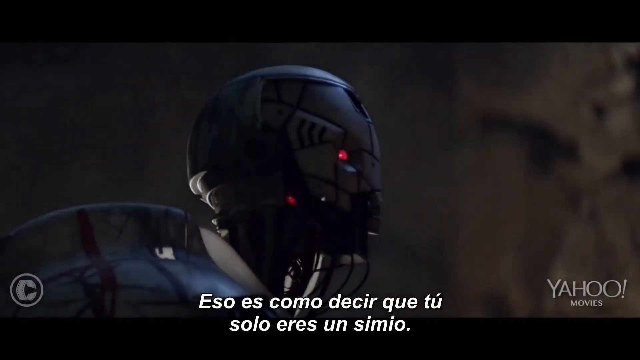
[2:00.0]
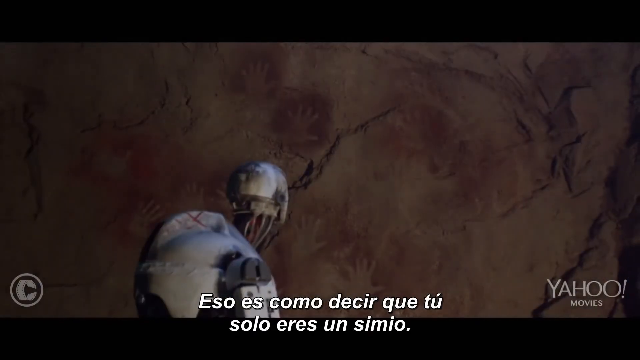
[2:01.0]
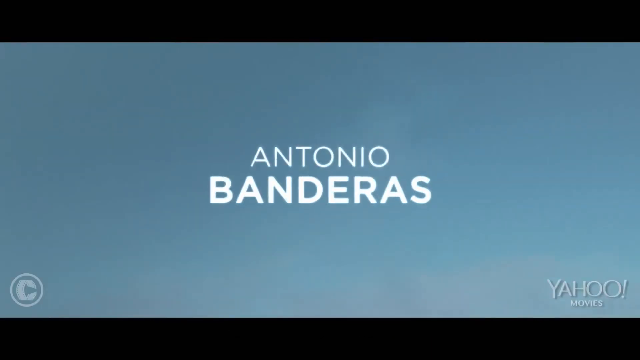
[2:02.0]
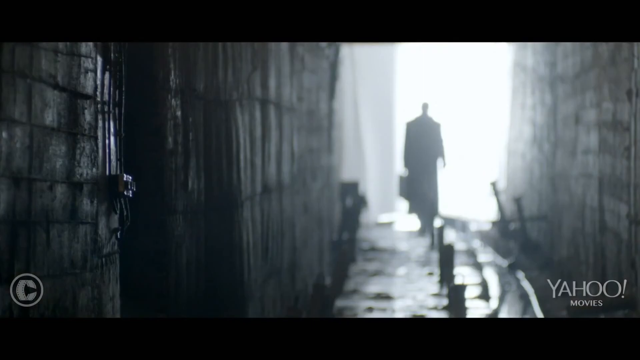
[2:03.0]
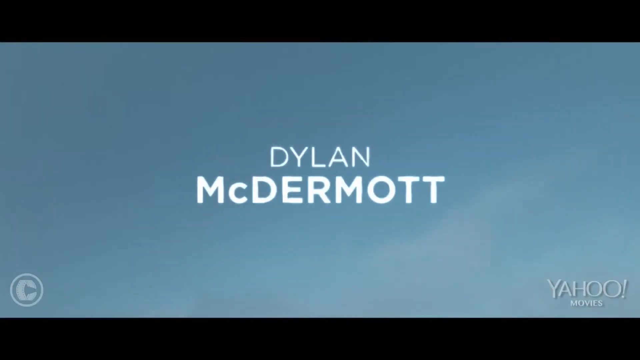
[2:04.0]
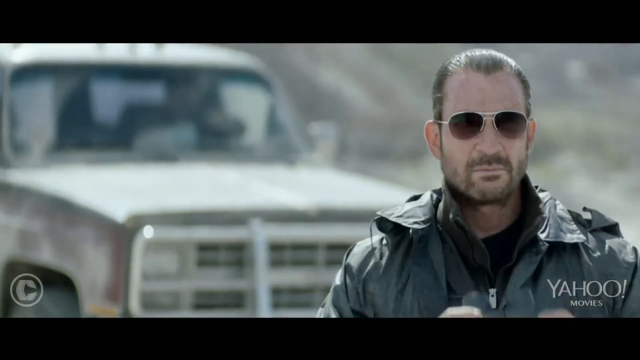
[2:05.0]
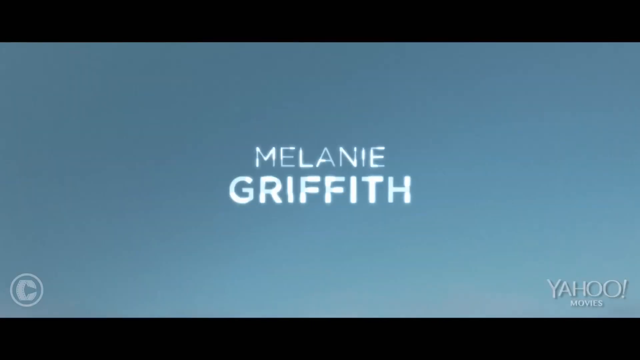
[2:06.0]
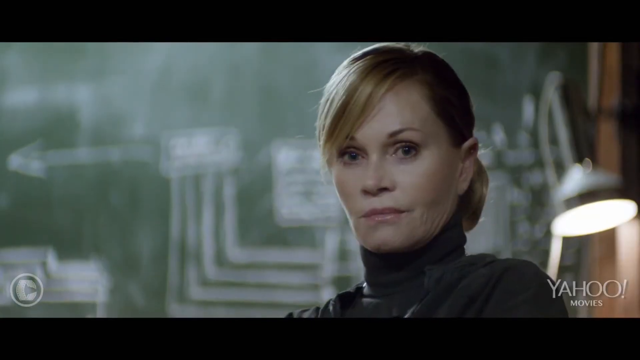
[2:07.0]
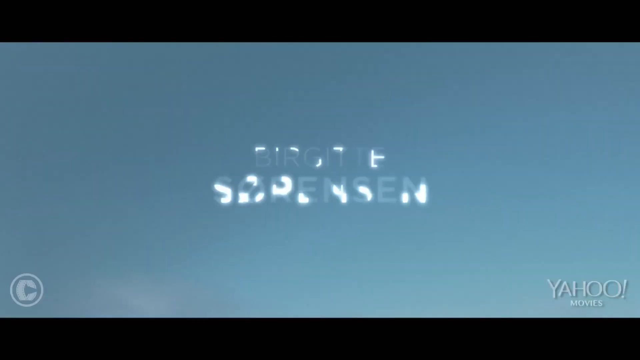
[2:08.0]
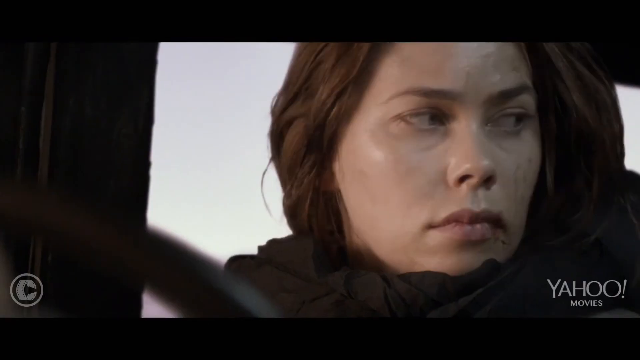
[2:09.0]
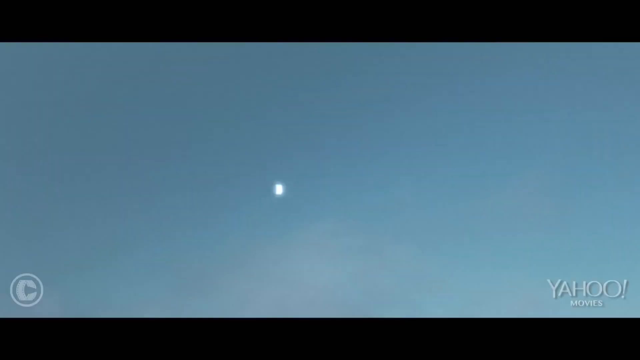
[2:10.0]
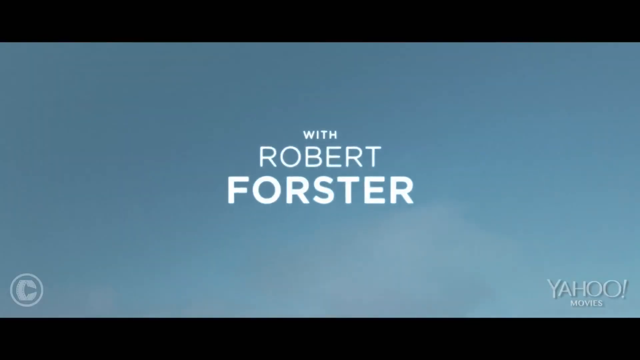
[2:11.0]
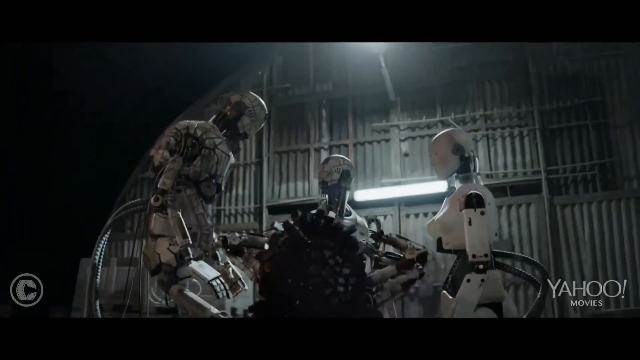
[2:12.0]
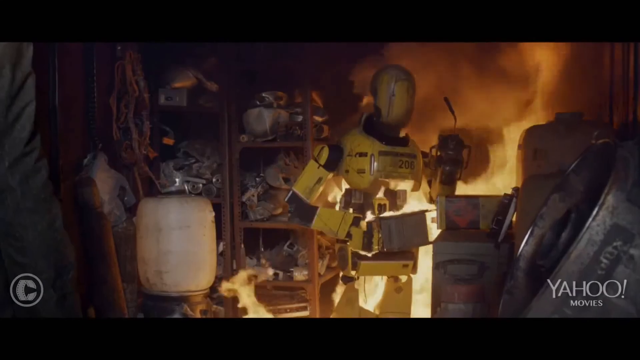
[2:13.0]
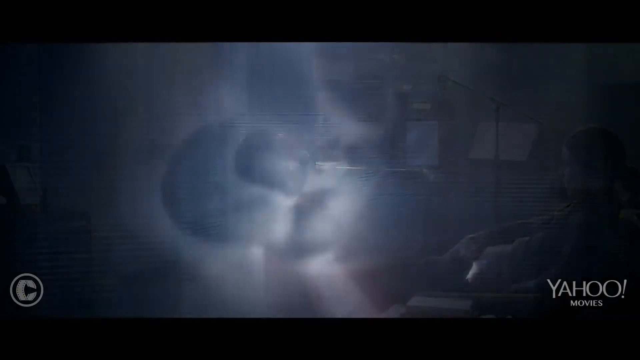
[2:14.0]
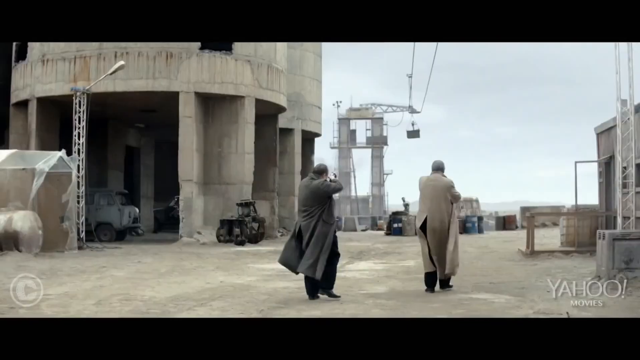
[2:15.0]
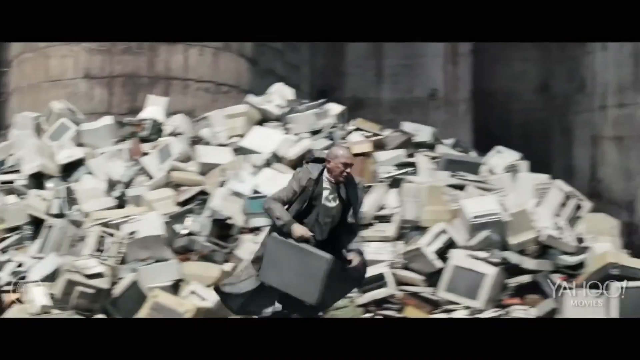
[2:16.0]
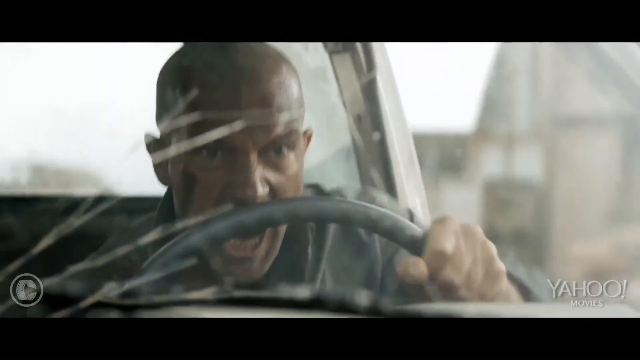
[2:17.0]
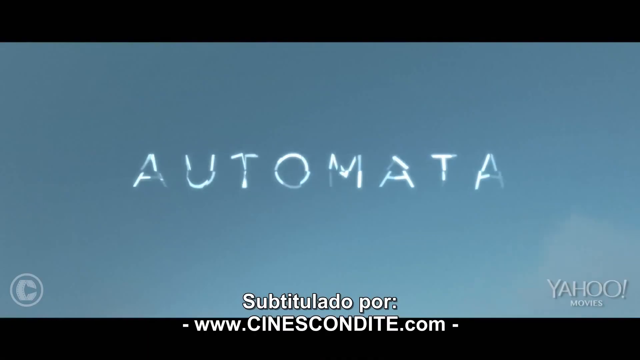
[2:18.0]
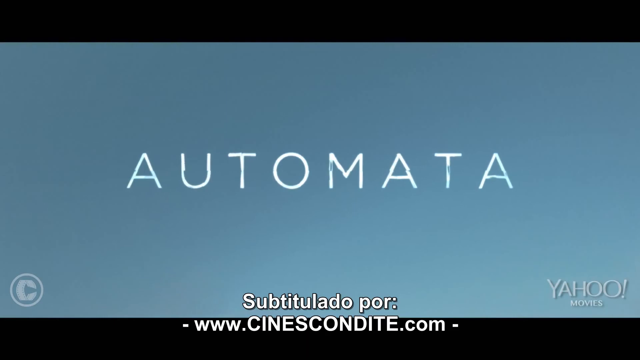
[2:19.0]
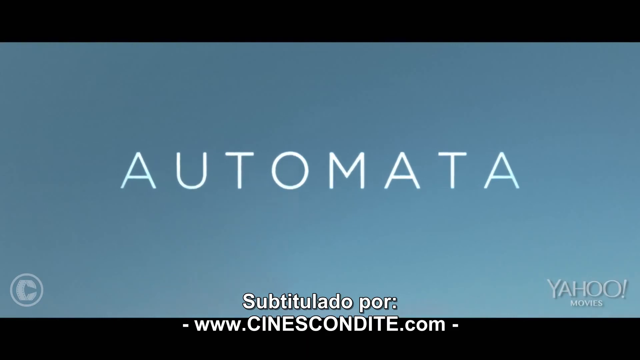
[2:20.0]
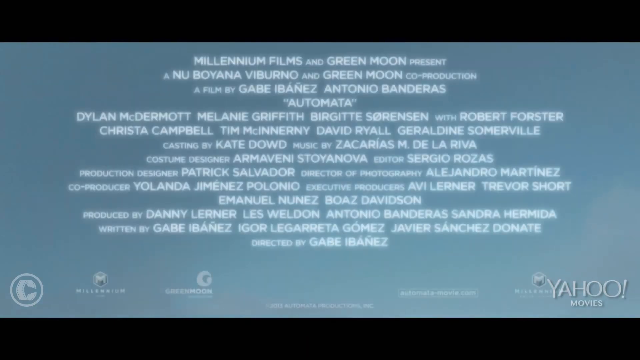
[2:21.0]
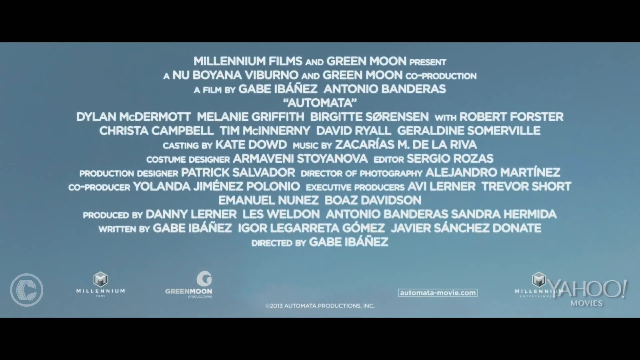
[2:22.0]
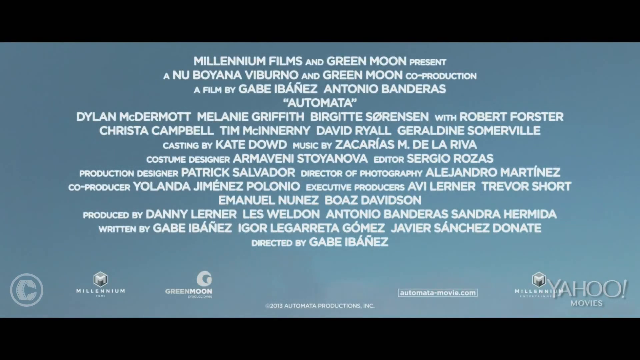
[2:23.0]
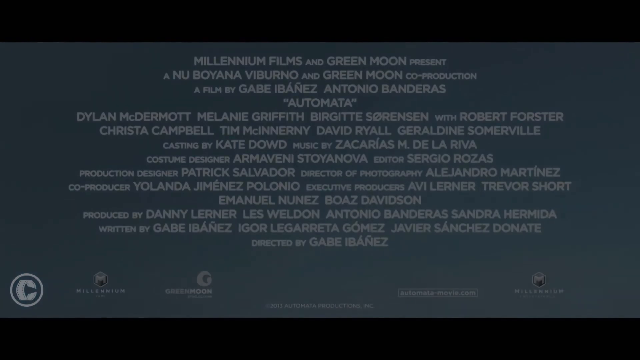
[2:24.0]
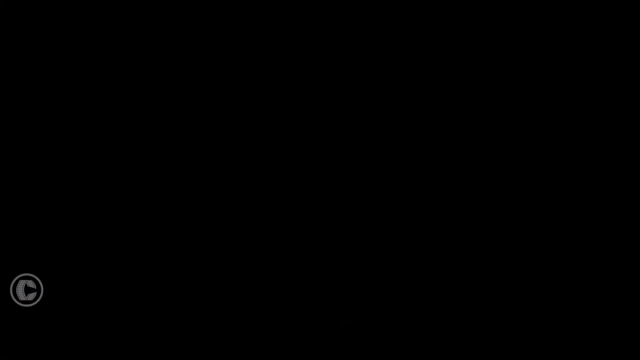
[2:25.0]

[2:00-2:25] Near the end of the trailer, a robot asks a human something, seemingly insulting the human's existence as if saying he is just a mammal. The cast is shown: Antonio Banderas, Dylan McDermott, Melanie Griffiths, Brigitte Sorensen and Robert Forster. Intense scenes play between the names: gunfire, explosions, robots doing work, and Banderas screaming. The title "automata" appears. The closing credits follow, showing Millennium Films and Green Moon as presenters, and Yahoo! Movies presenting the trailer. The movie looks very futuristic.